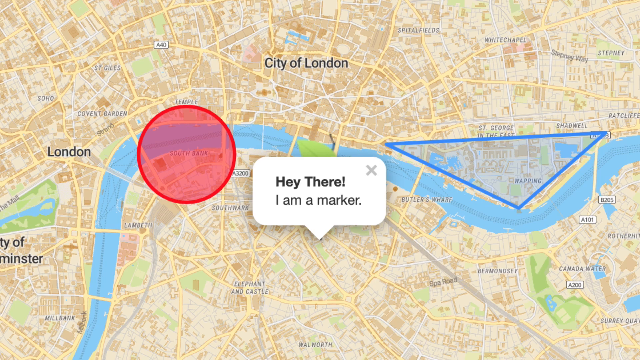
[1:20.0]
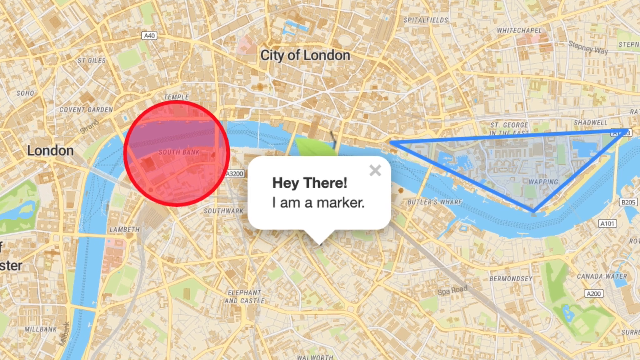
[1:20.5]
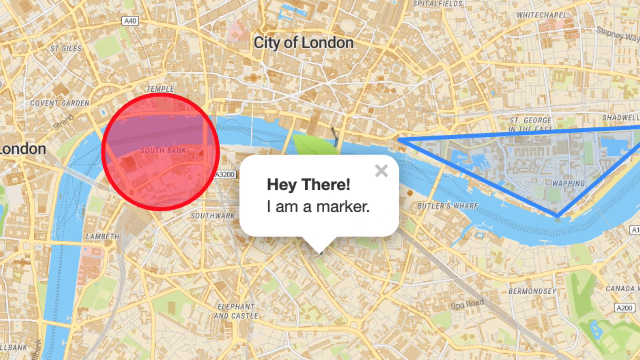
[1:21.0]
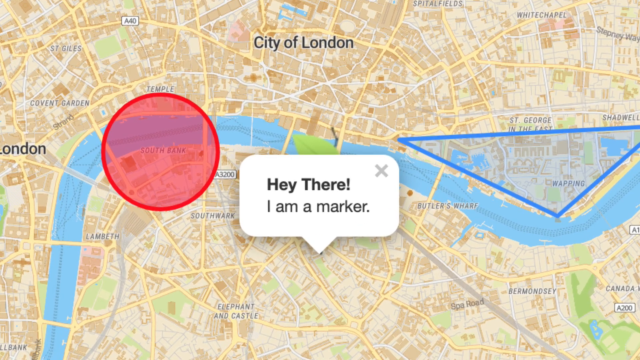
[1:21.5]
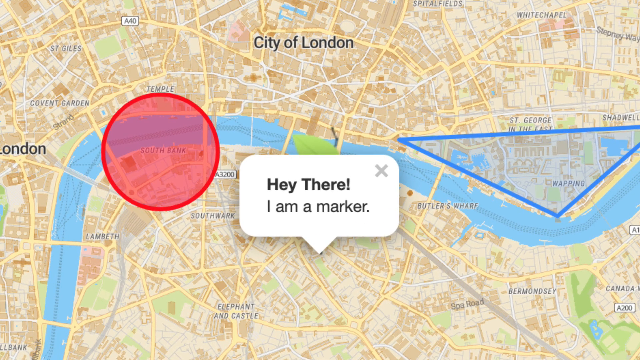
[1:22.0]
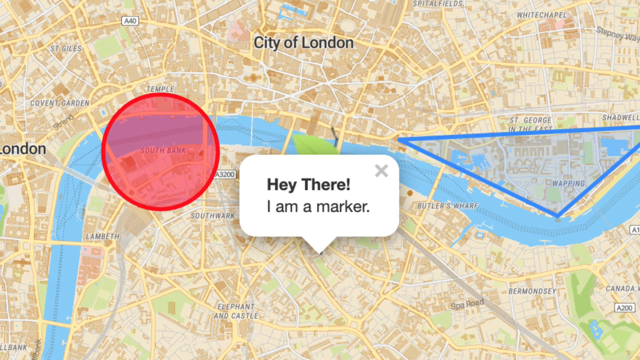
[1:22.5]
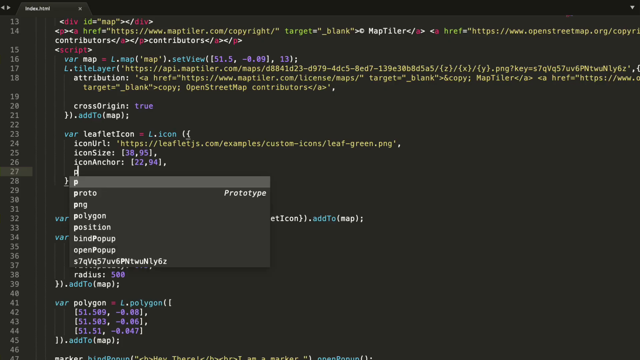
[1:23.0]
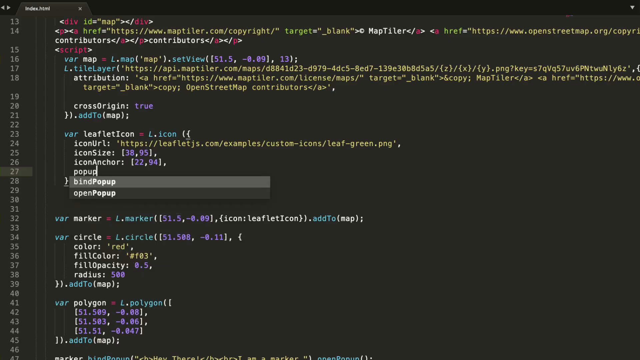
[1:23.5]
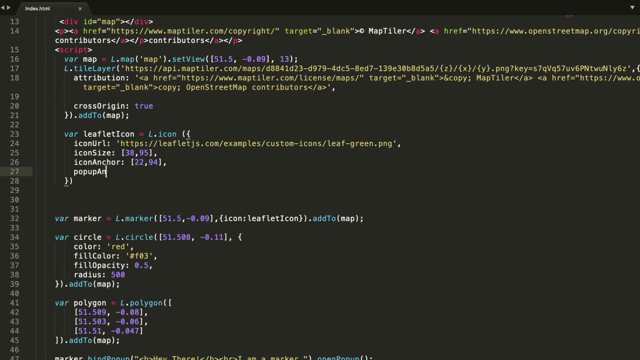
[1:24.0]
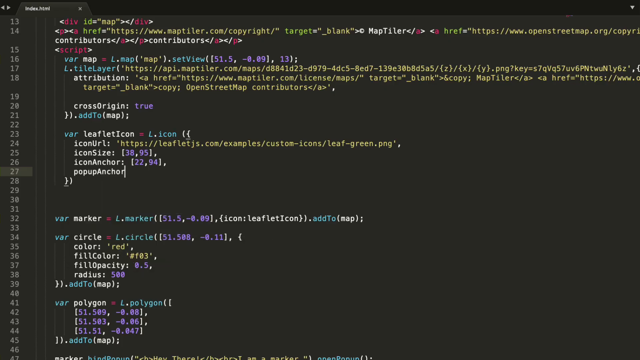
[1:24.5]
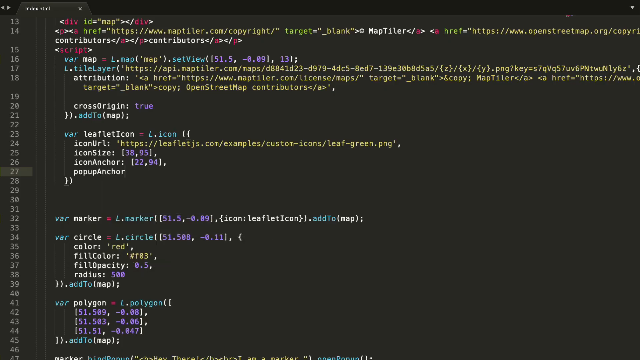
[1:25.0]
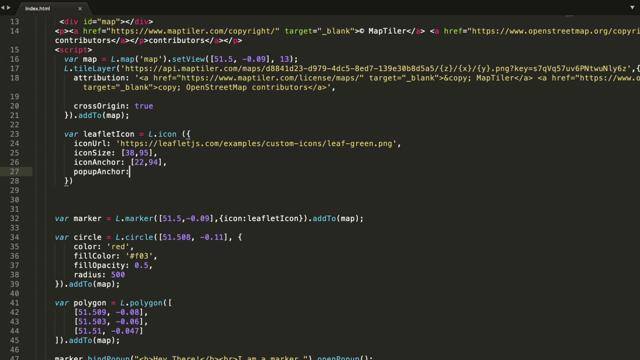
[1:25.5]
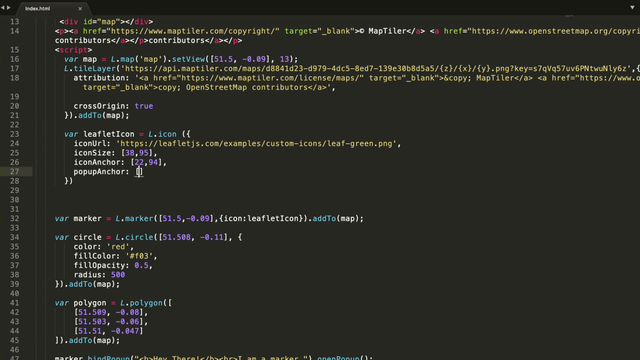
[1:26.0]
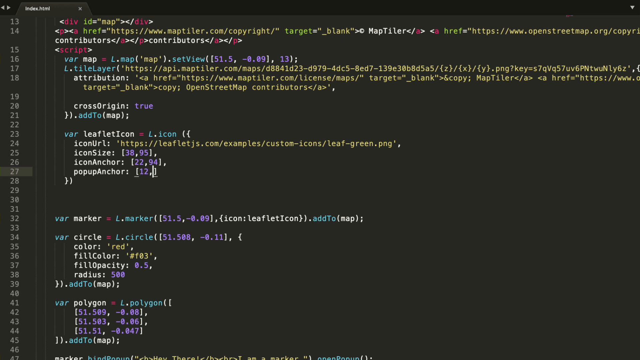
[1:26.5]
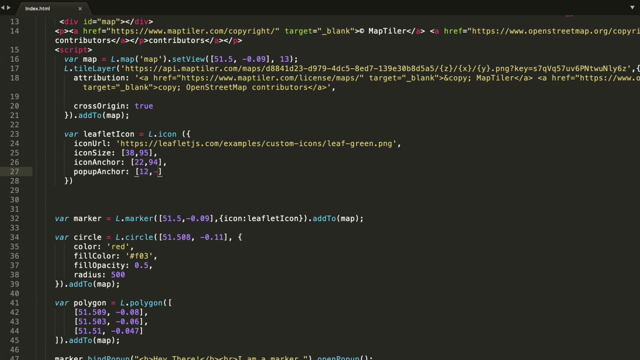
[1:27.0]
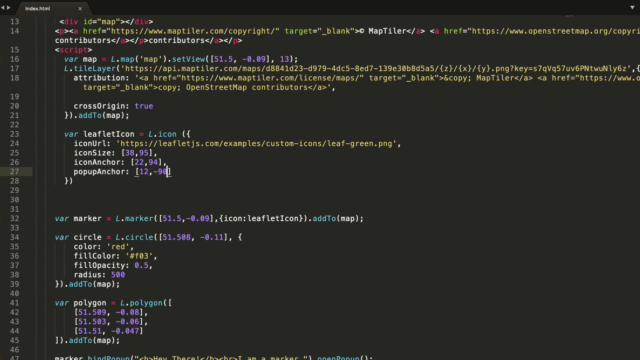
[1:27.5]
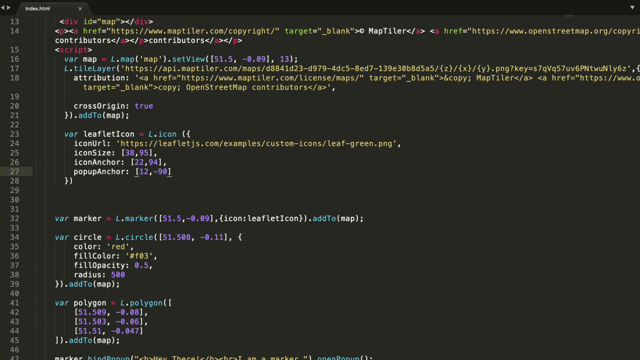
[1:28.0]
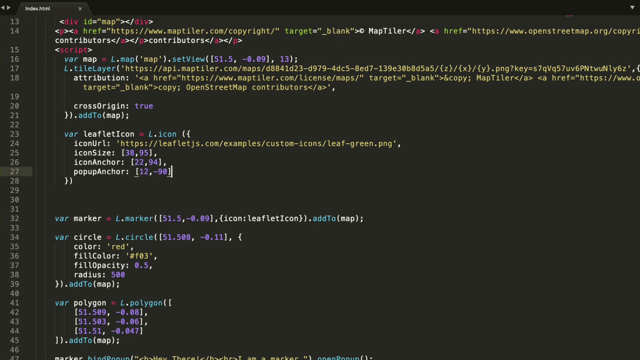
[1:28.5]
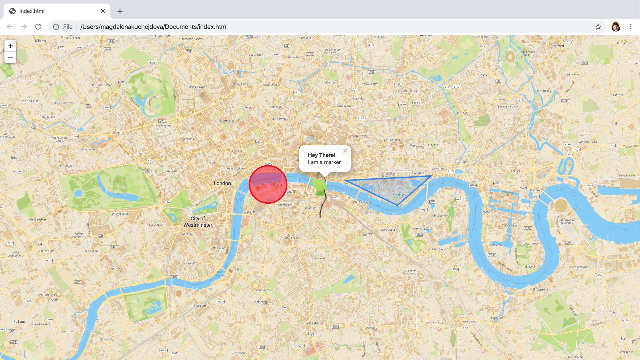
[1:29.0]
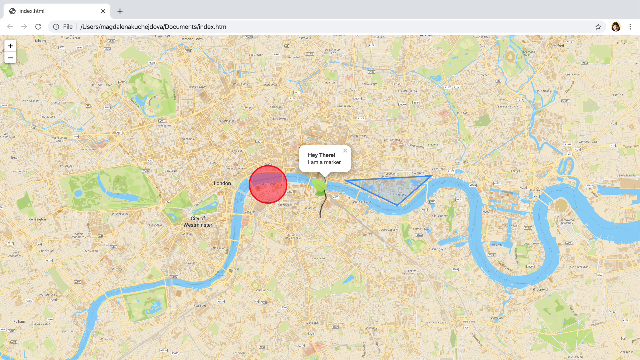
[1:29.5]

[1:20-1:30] A pop-up anchor is added: underneath the icon anchor line, the words pop-up anchor are typed and set to 12 followed by a comma. The view then goes back to the map. The two numbers are apparently 12 and minus 90.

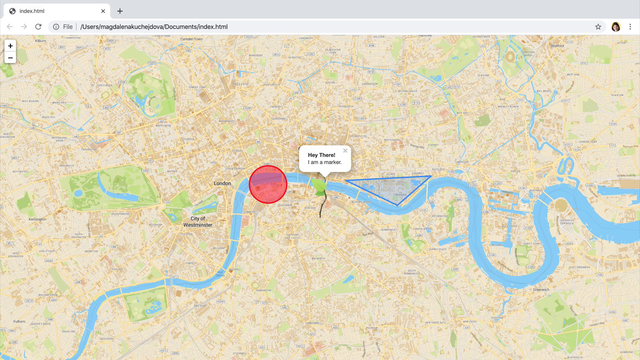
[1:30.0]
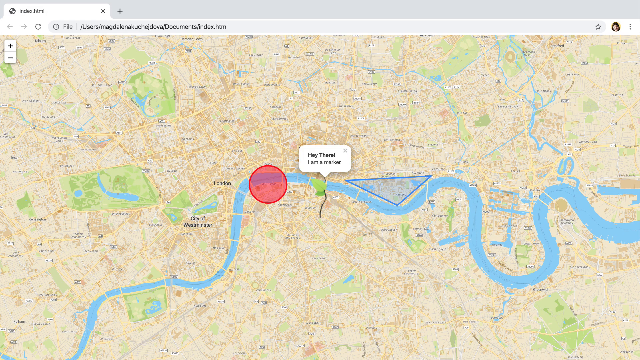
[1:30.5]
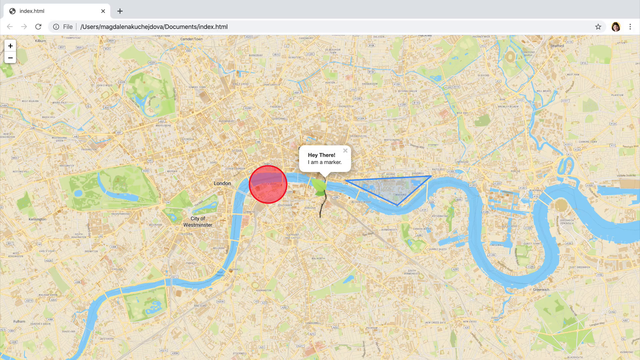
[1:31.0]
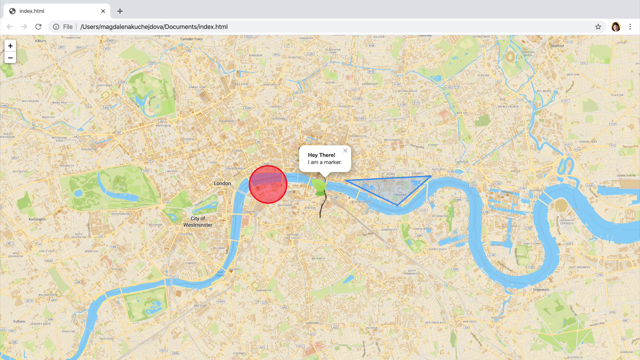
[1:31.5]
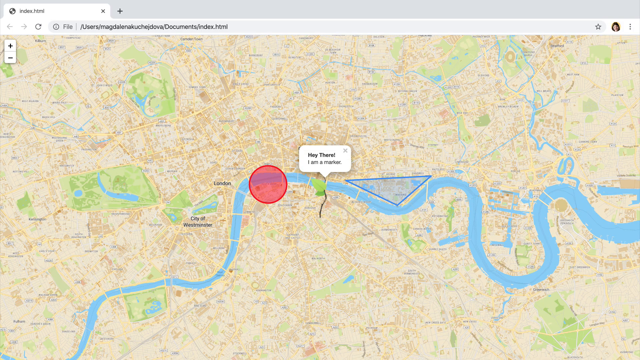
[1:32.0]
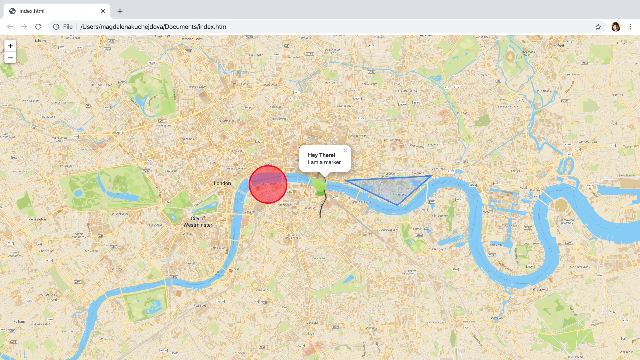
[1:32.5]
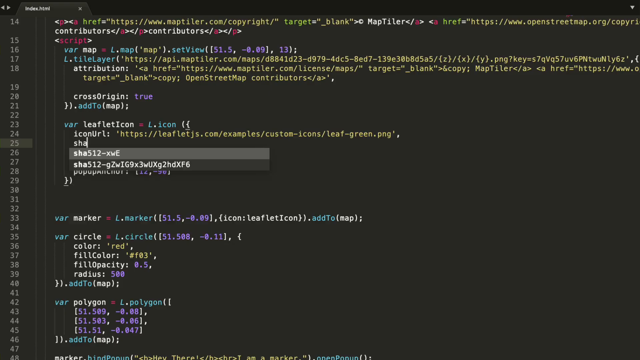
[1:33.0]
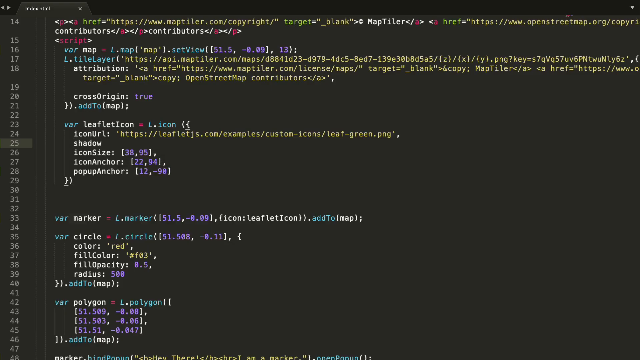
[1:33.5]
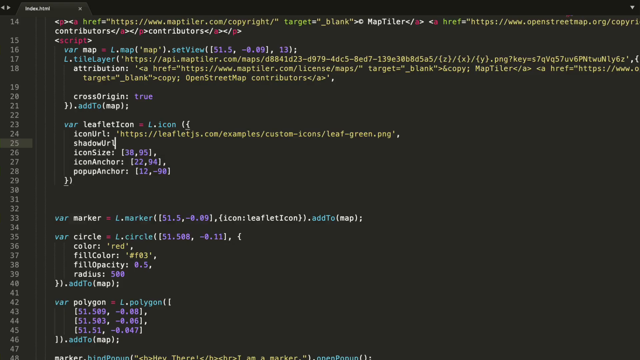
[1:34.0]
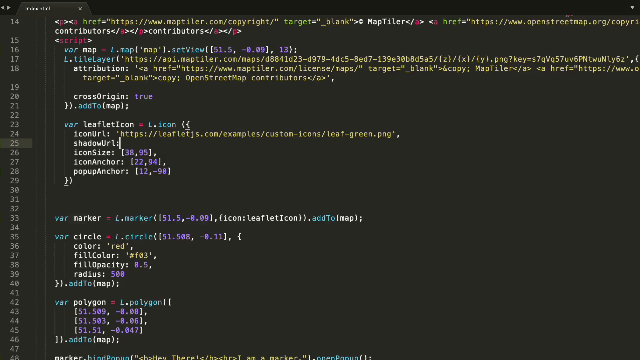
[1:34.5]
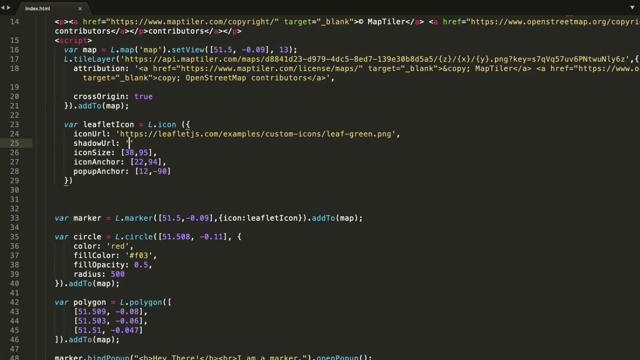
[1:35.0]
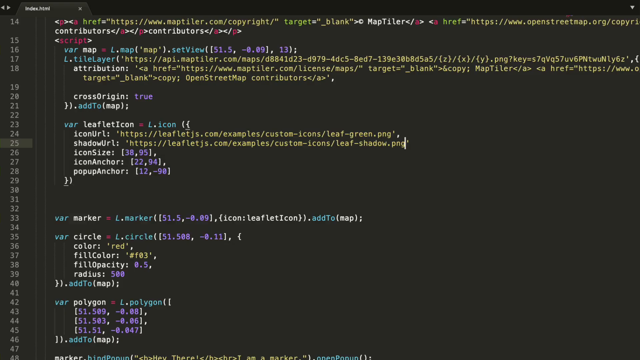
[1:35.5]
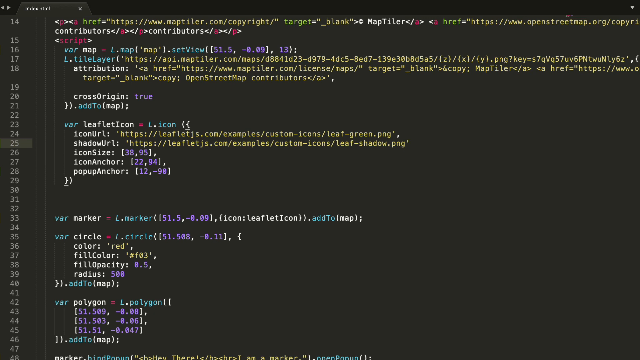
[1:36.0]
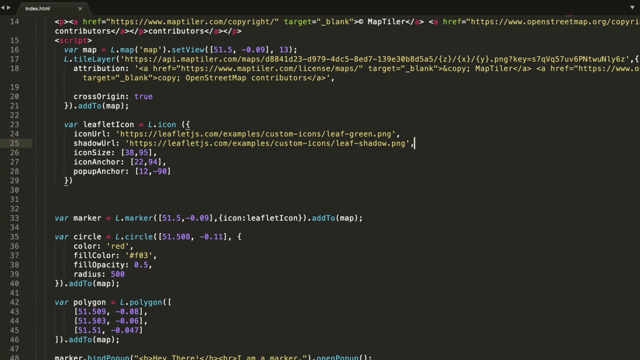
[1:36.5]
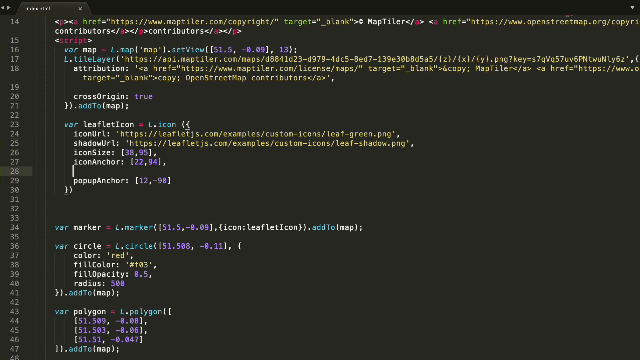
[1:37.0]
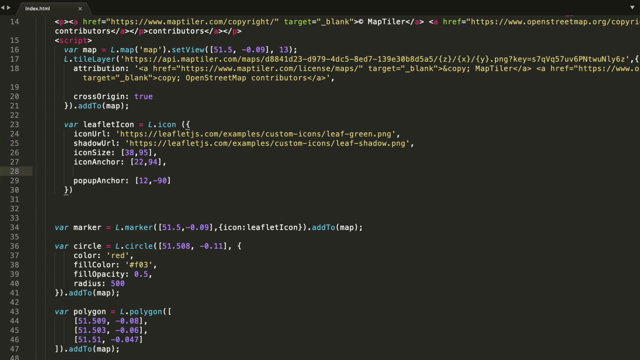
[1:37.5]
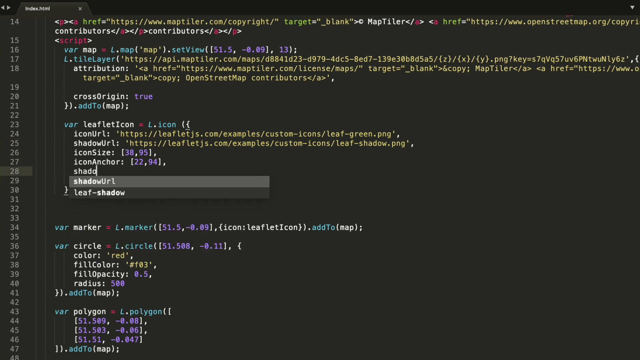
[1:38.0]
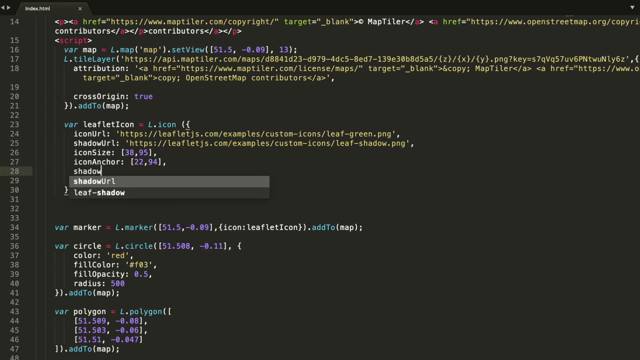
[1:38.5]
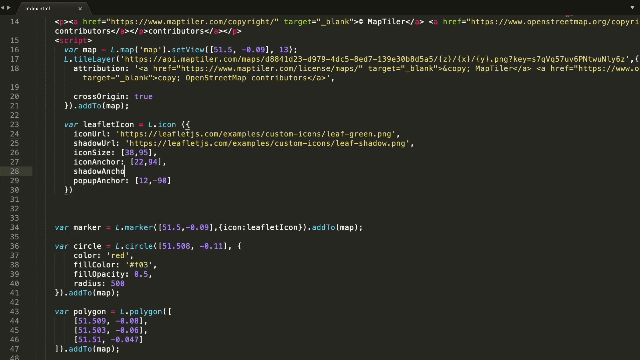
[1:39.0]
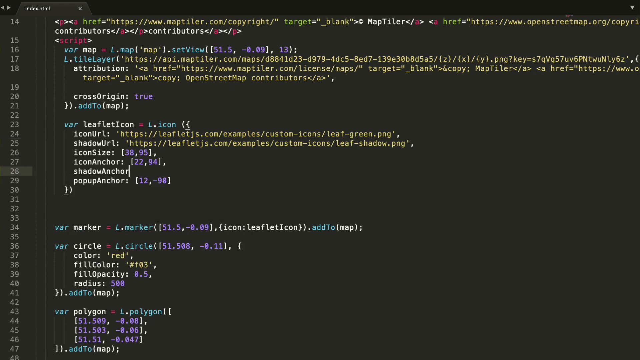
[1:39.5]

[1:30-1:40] Shadow appears to be added to the icon. Underneath the icon url line, shadow url is inserted with another HTTPS URL, and underneath the icon anchor, shadow anchor is added with the number four. The map is then shown.